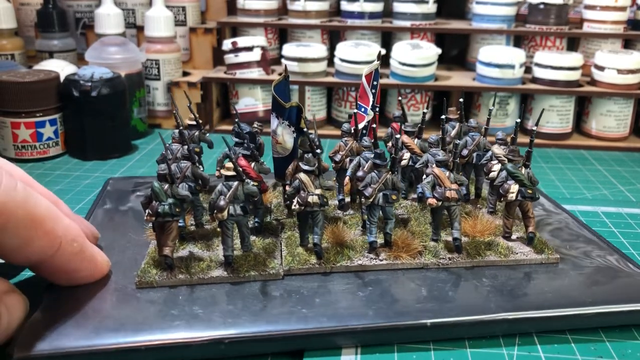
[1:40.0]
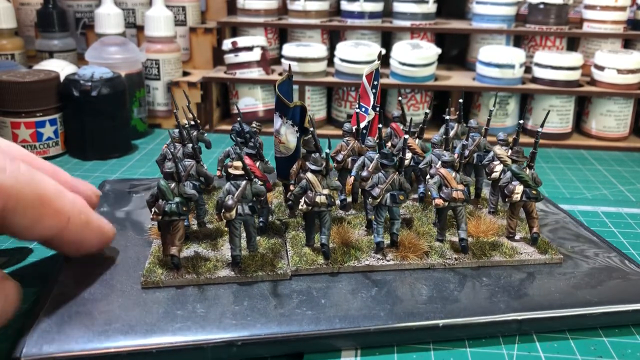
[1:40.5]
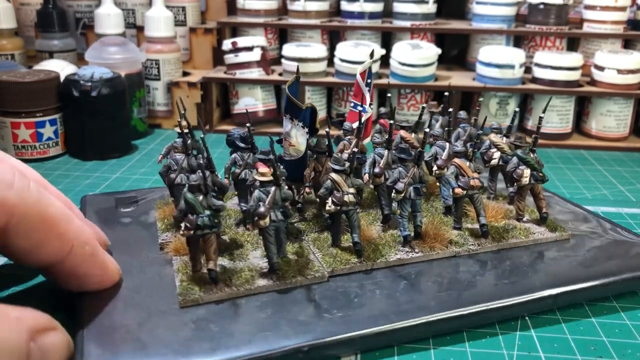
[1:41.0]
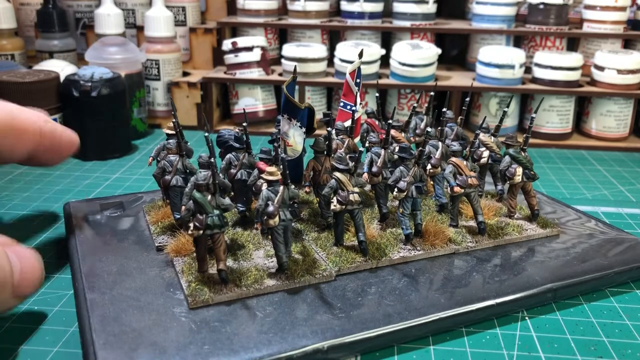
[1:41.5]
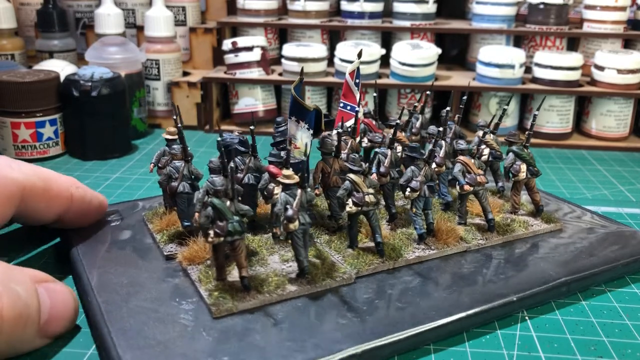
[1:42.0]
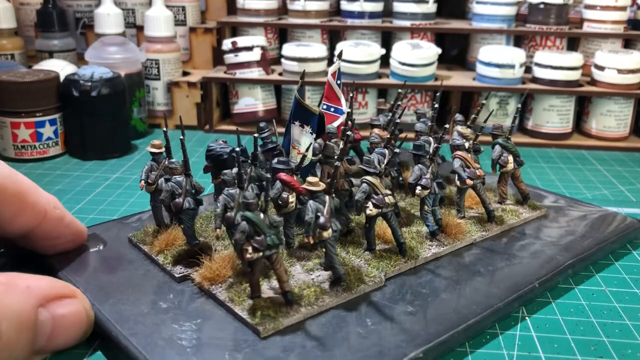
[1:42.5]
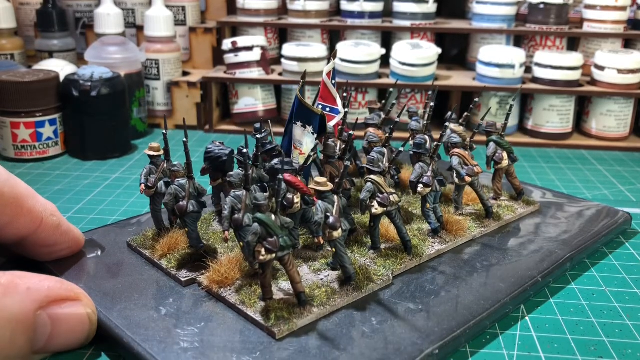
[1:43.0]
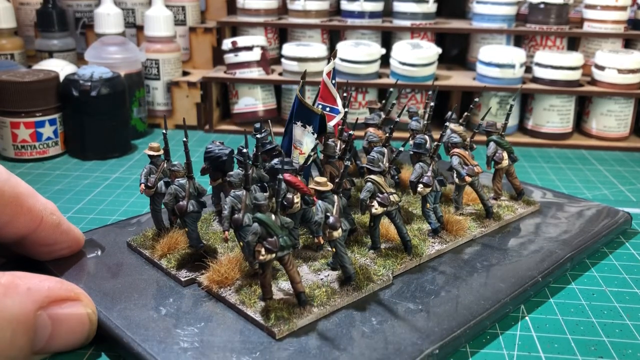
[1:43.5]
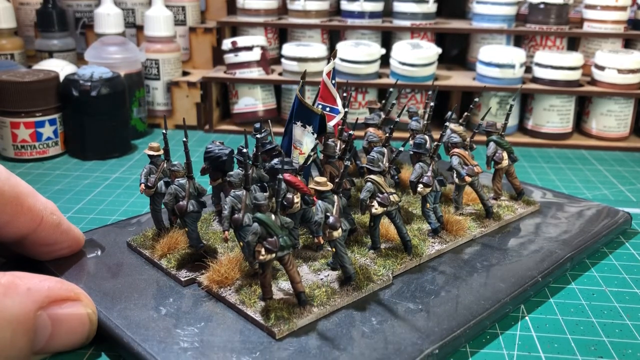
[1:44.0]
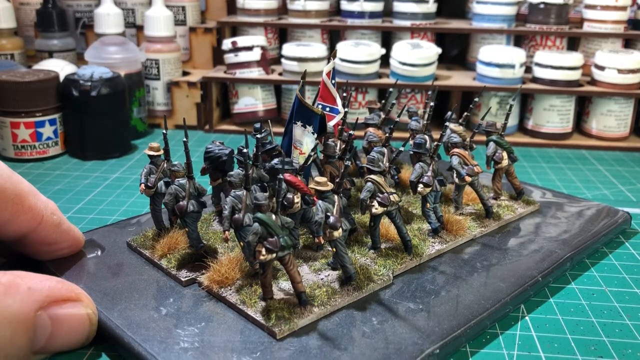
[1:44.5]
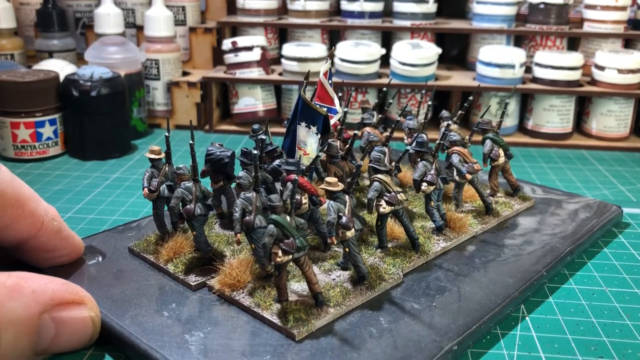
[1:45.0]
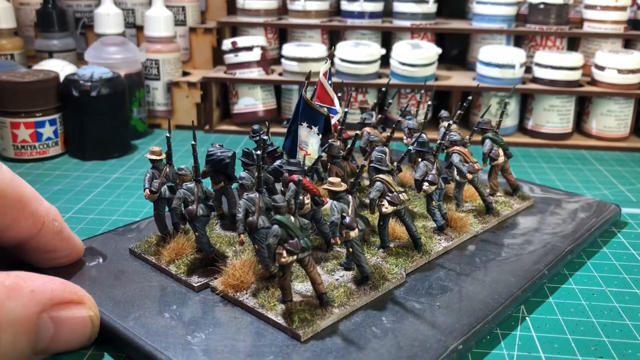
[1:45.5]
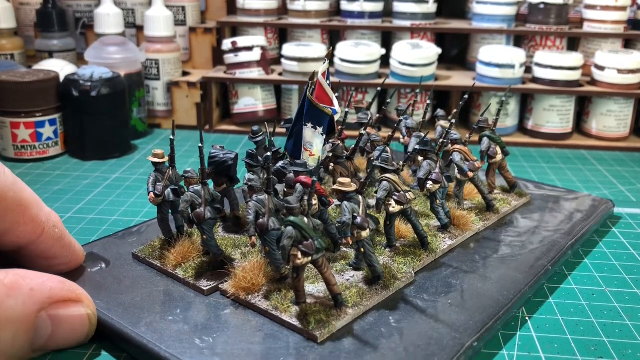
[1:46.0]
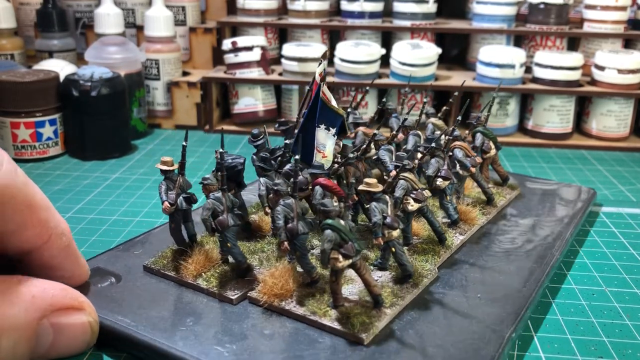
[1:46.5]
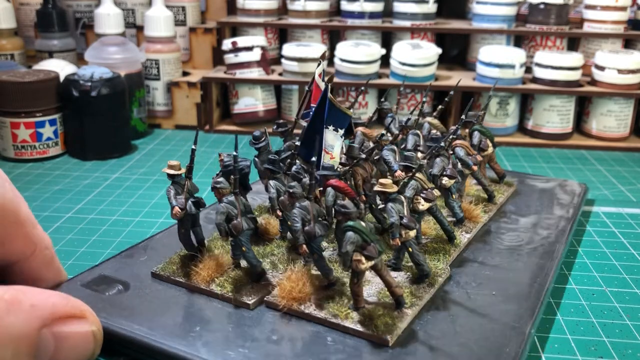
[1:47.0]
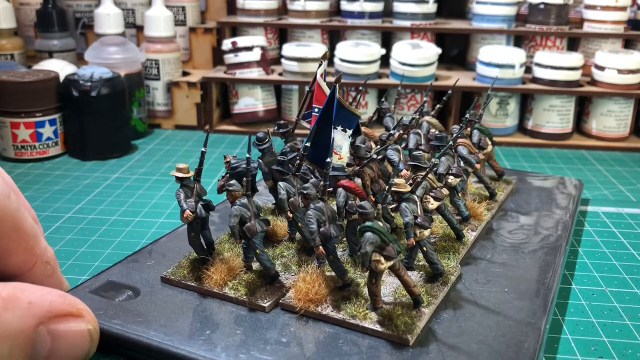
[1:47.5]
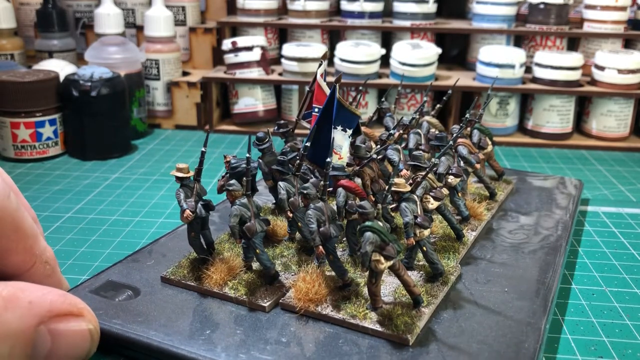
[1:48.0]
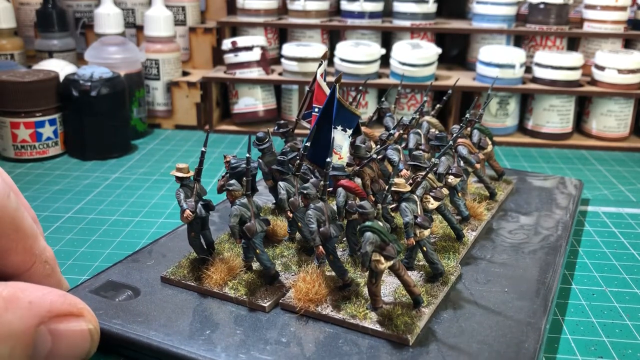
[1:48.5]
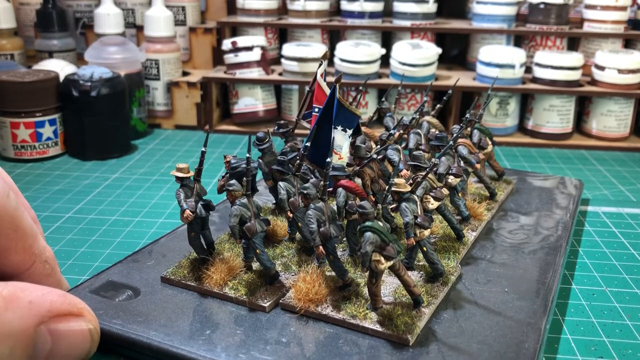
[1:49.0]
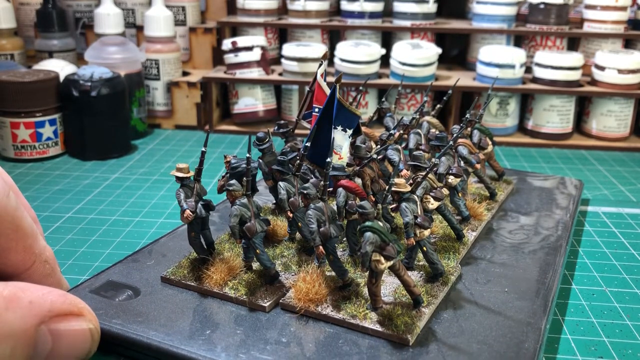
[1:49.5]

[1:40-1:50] A male hand moves the figures from one side to the next. There are approximately 15 to 20 figures, all male, which appear to be going into a battle. The hand likely belongs to the person who created them. The figures form a very detailed piece of art.